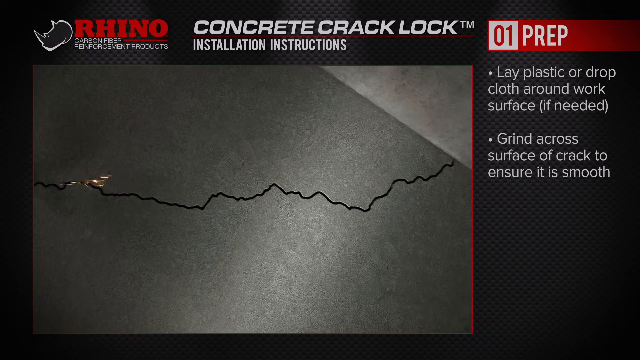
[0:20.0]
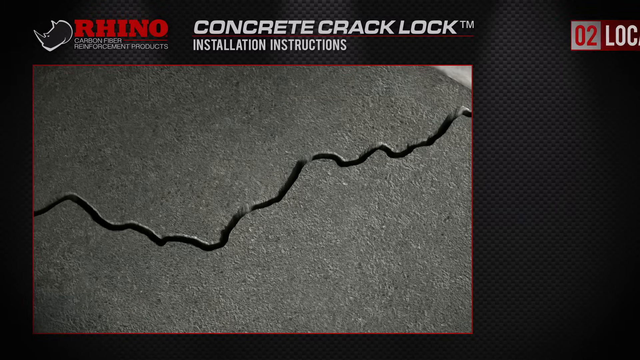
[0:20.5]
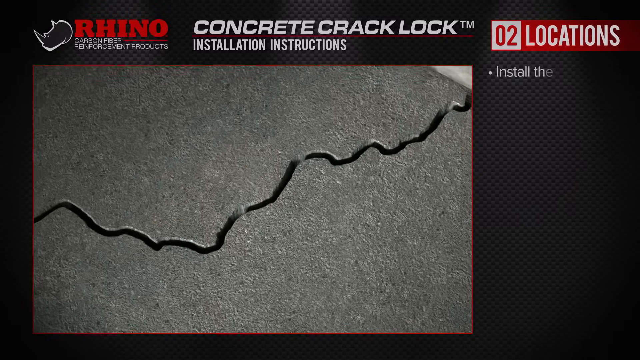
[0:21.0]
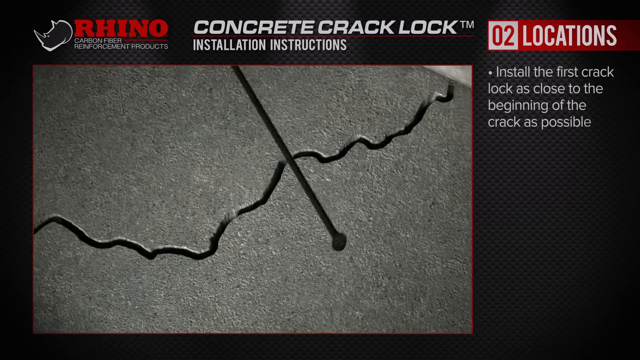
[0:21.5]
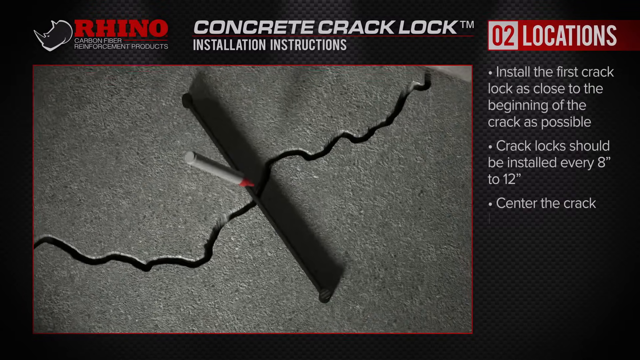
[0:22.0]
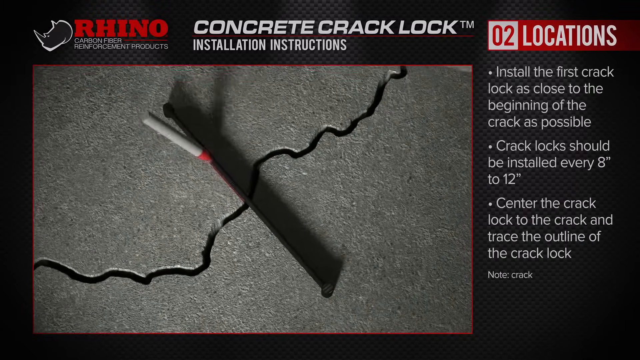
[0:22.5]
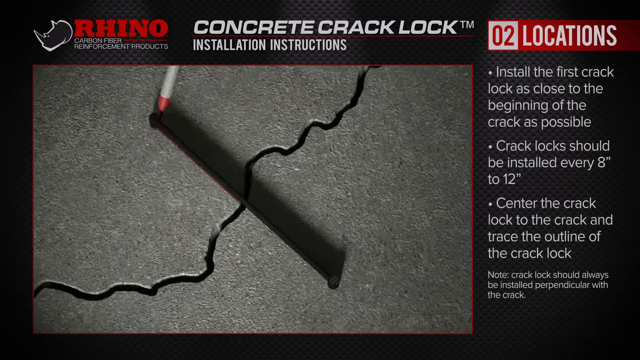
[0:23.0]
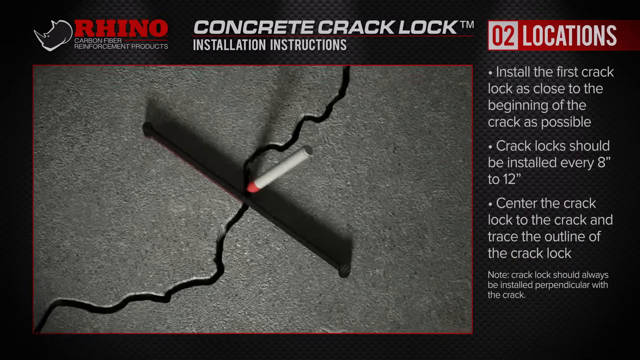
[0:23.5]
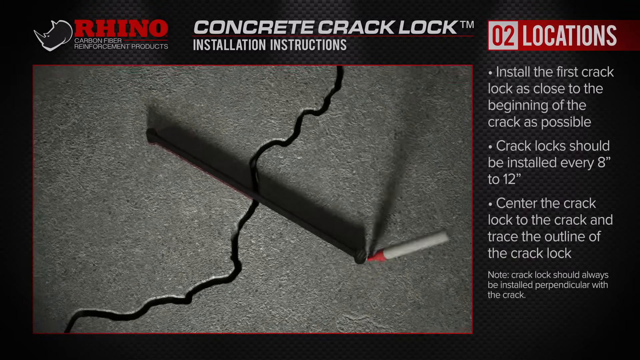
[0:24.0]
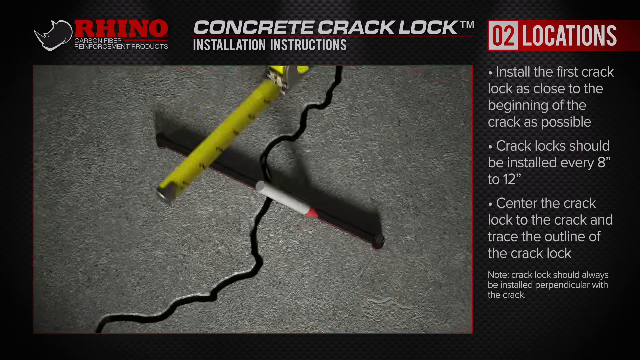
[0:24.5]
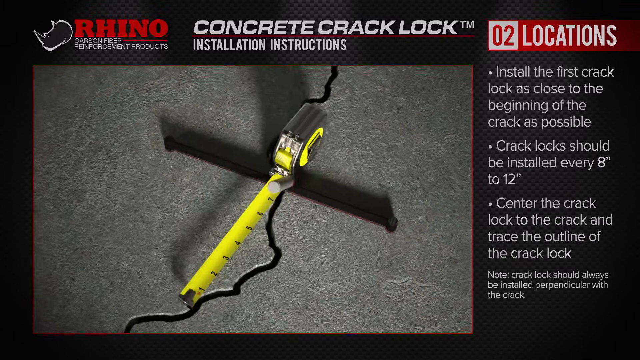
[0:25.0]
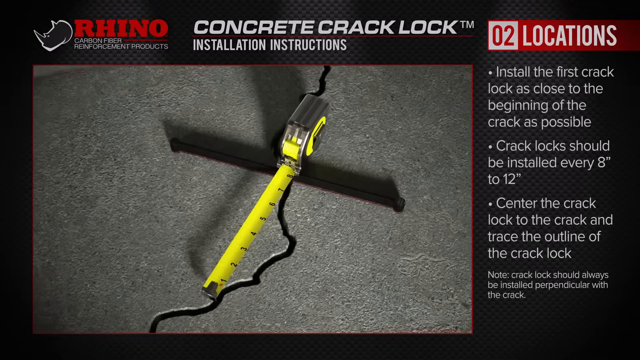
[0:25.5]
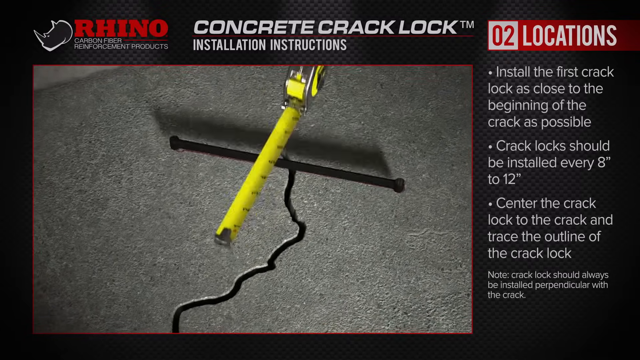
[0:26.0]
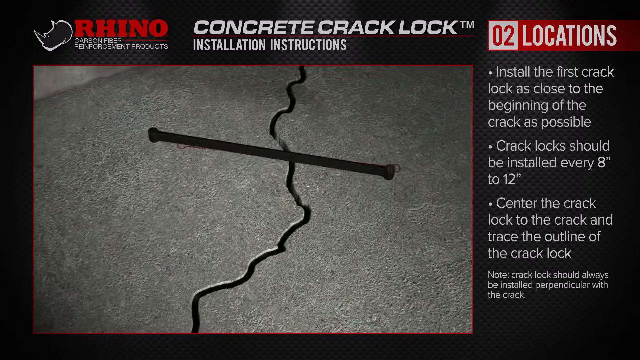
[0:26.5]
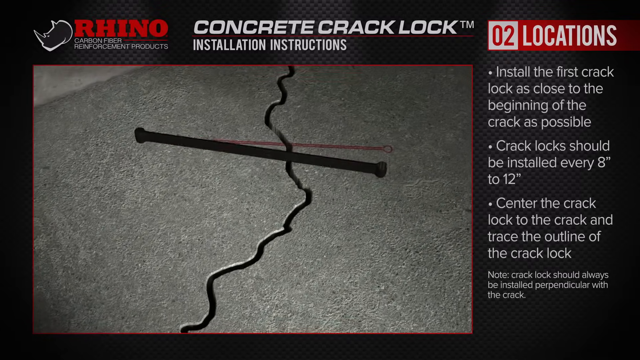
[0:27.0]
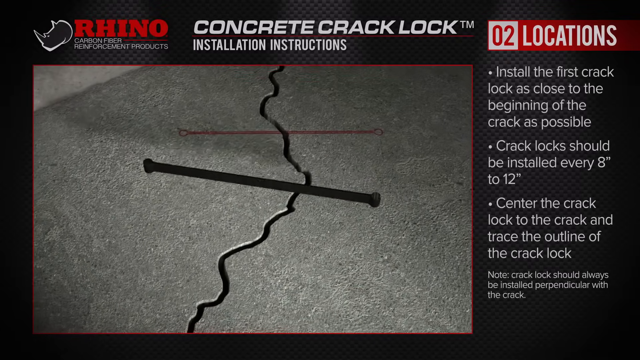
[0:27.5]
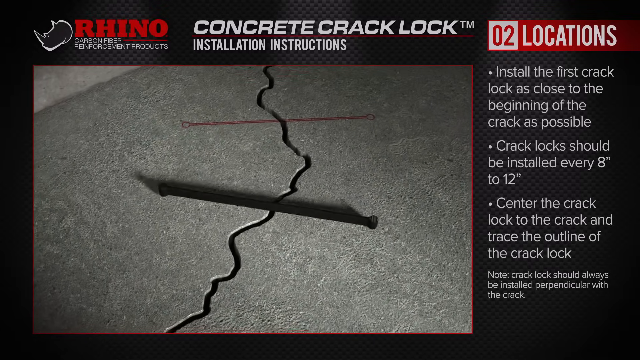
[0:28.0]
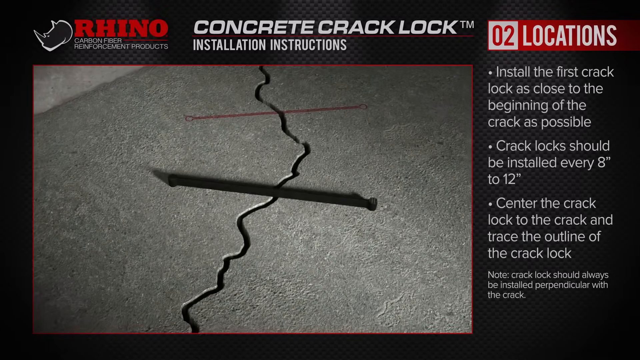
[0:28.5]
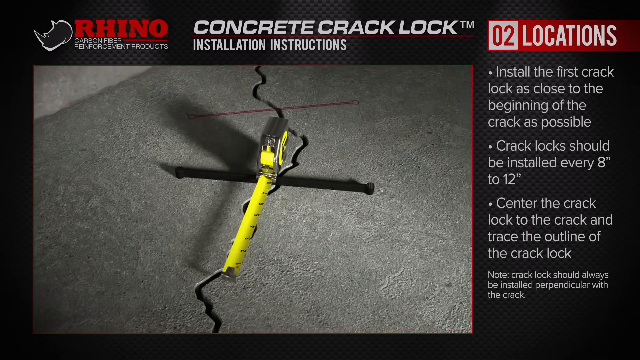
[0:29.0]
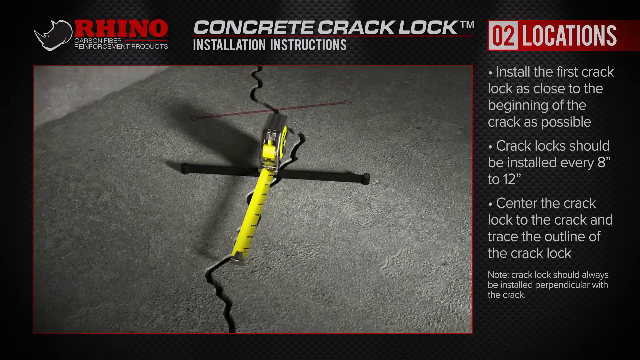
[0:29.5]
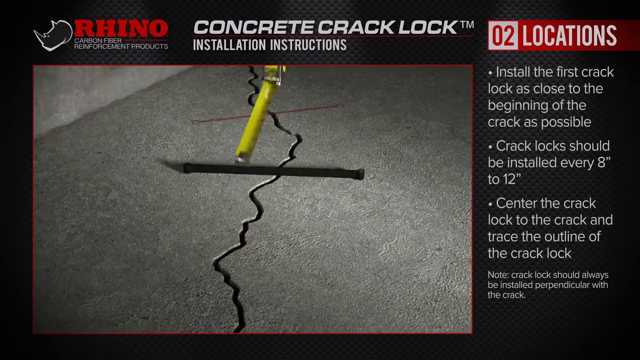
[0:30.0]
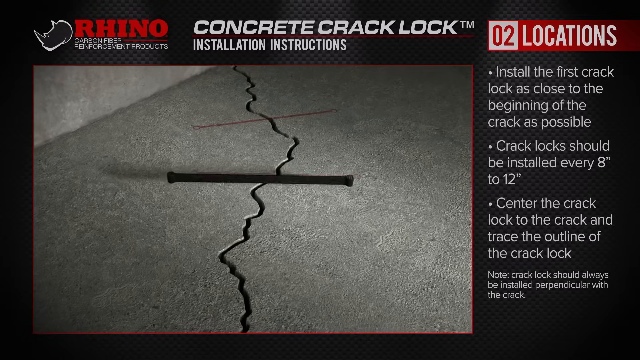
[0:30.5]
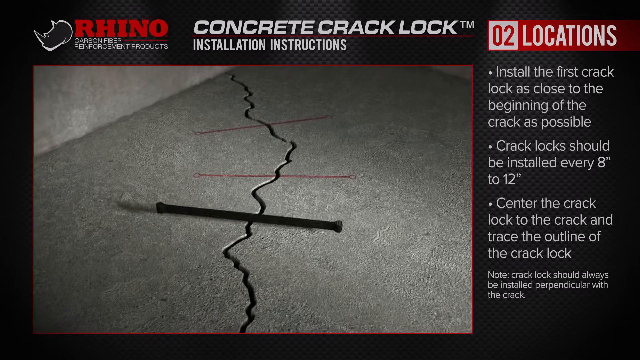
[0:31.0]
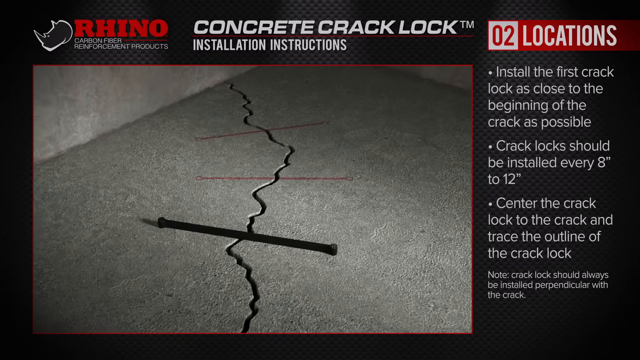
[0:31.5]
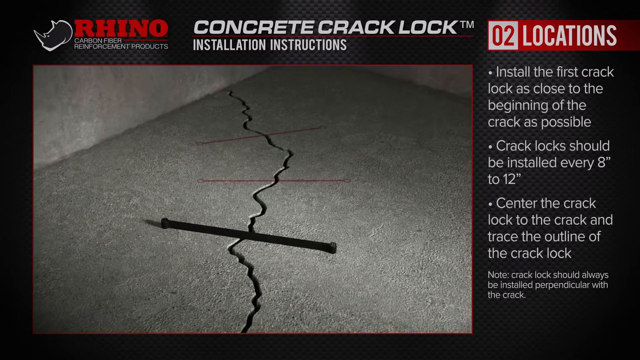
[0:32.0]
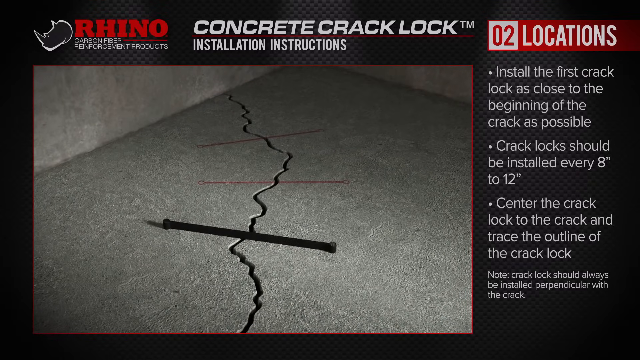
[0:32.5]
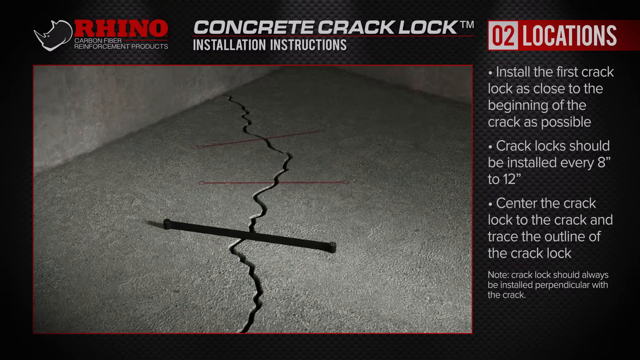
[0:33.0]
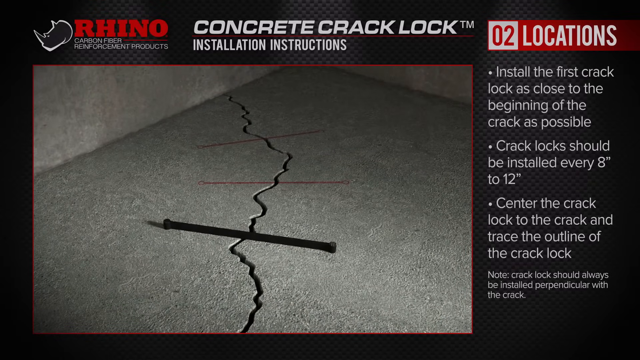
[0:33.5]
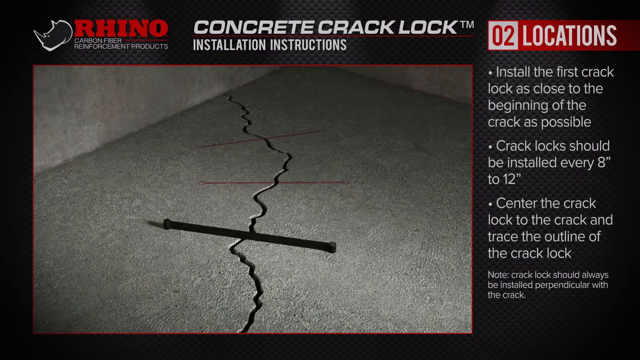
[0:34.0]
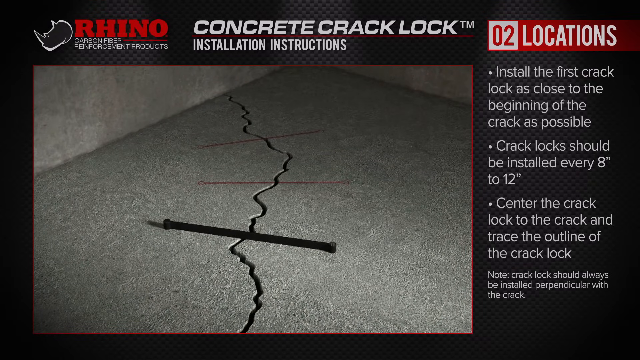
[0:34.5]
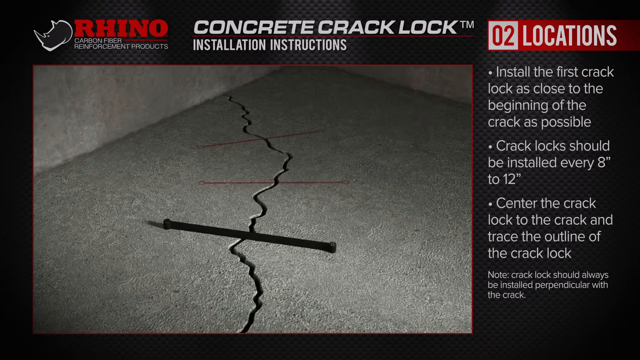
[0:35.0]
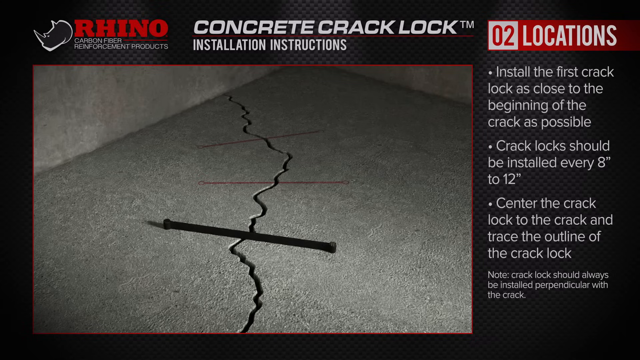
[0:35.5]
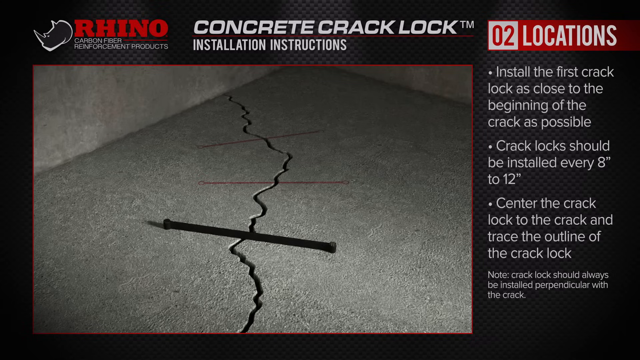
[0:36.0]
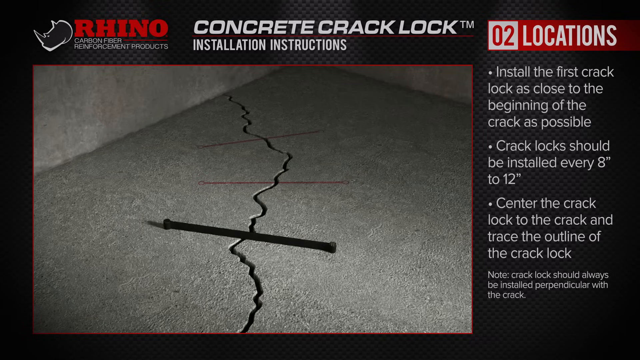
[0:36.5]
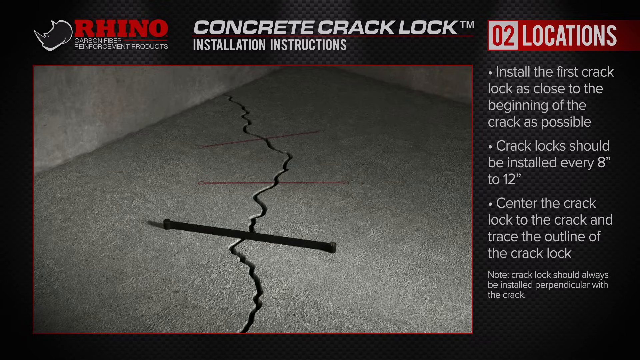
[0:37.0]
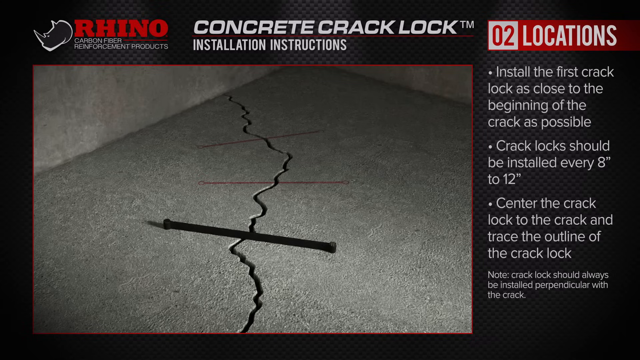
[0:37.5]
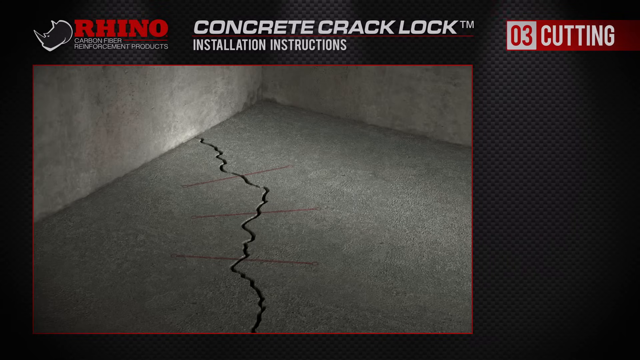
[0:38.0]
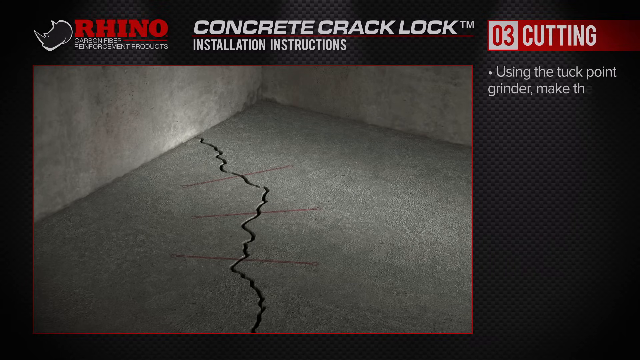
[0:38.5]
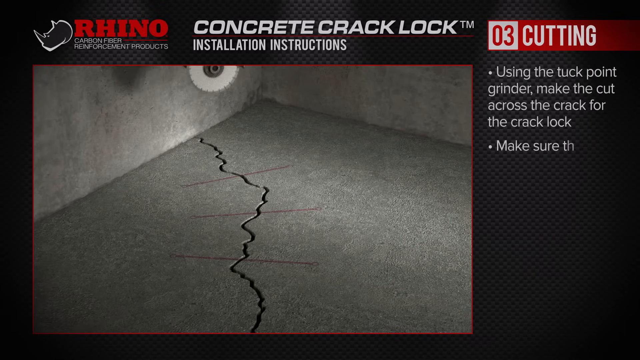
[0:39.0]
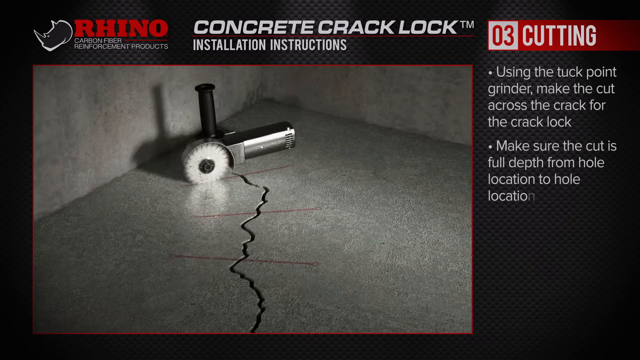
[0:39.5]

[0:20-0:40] Step number two, location, is shown. "Location" is written in white, while the number two is in red on a white background. In the top-left corner of the screen is the Rhino Carbon Fiber Reinforcement products name, with "Rhino" in red and an image of a rhino's head, the company's logo, attached. A concrete crack log trademarked installation instruction is shown. A video shows a cracked floor with an object that looks like a ruler placed on it at a diagonal angle, and a pen on the object; the pen is white with a red tip. The text says to install the first crack log as close to the beginning of the crack as possible, that crack logs should be installed every 8 to 12 inches, and to set the crack log to the crack and trace its outline. The pen moves along the crack log, and a yellow ruler with a black and yellow stopper is introduced. The ruler is placed on the crack log, then the crack log moves position, leaving a red line at its previous position. The ruler is placed on the crack log at its new position and removed as the crack log moves again, each time leaving a red line at its previous position, and this repeats constantly. A cutting instruction follows, about using the torque point grinder to make a cut across the crack for the crack log. The torque point grinder is shown being used to serrate the crack in the ground, and the text says to "grind across the surface of the crack to ensure it's smooth".